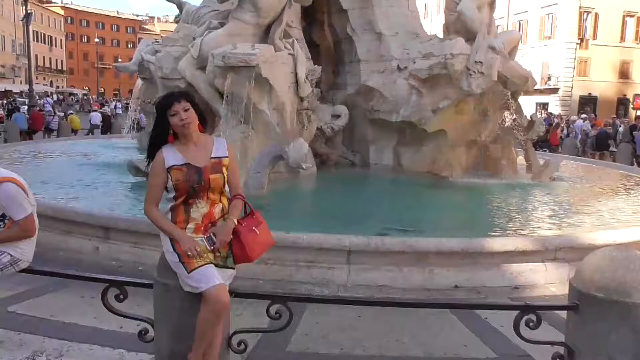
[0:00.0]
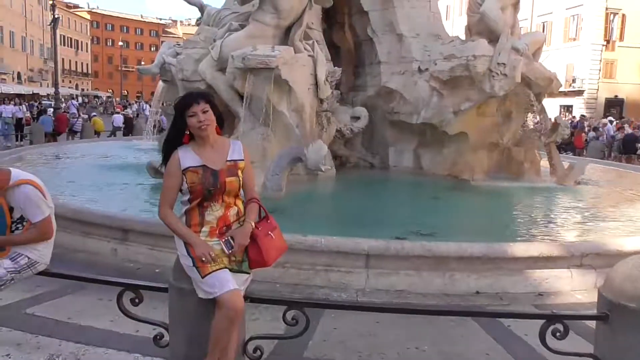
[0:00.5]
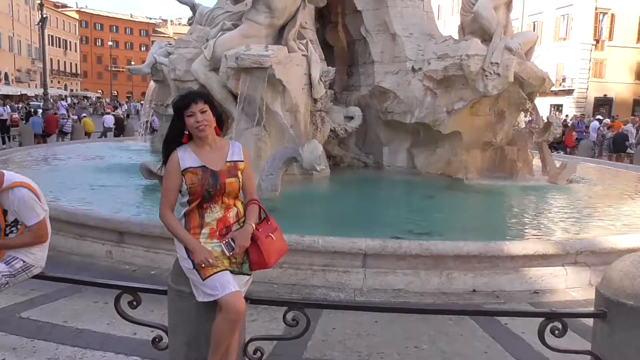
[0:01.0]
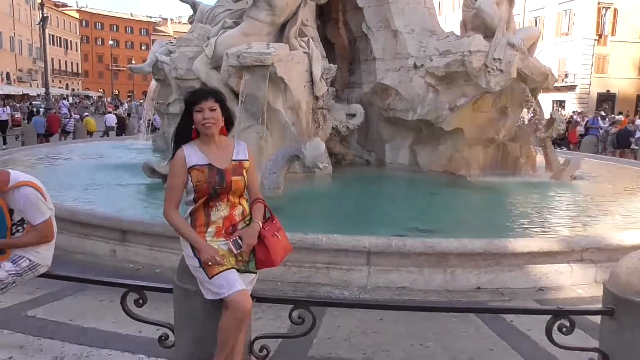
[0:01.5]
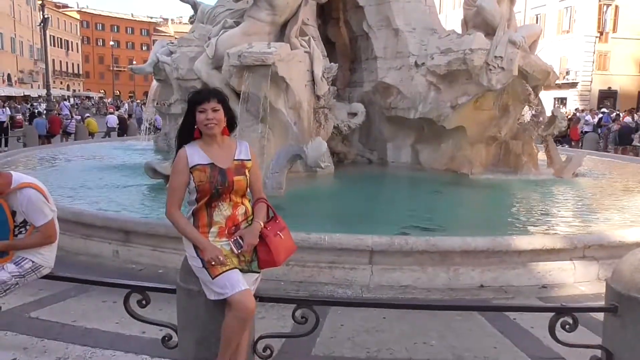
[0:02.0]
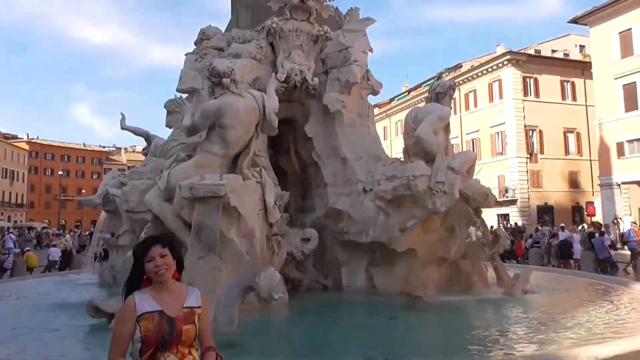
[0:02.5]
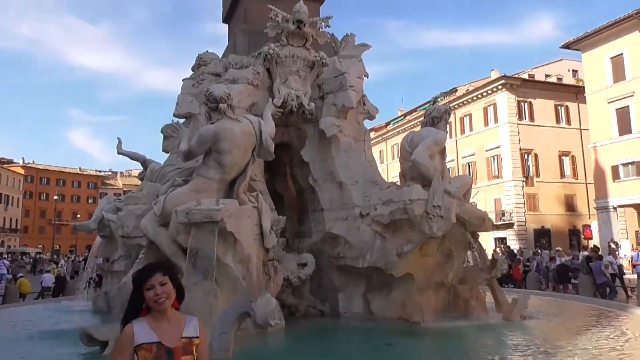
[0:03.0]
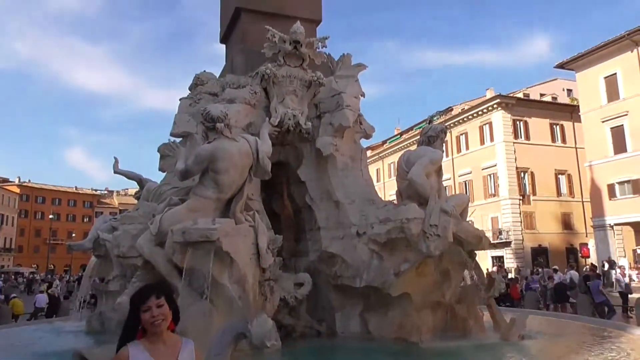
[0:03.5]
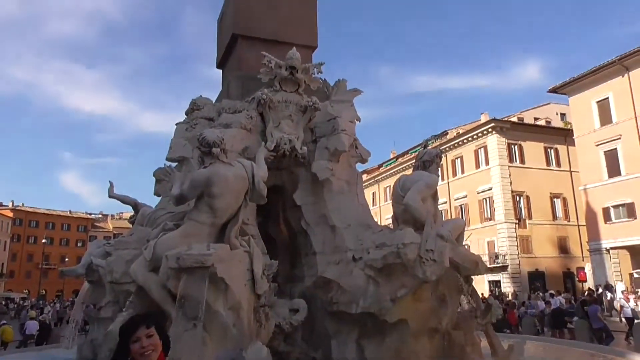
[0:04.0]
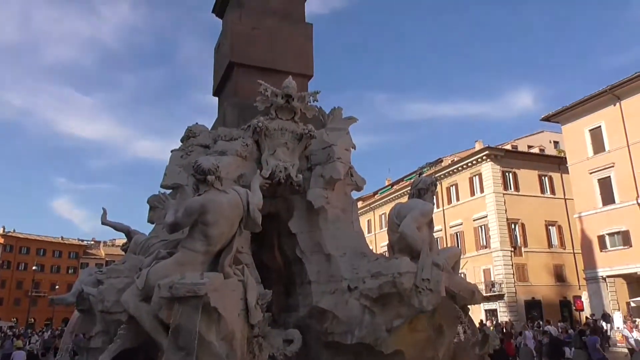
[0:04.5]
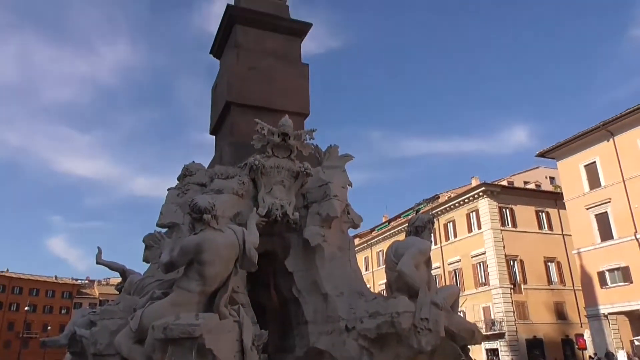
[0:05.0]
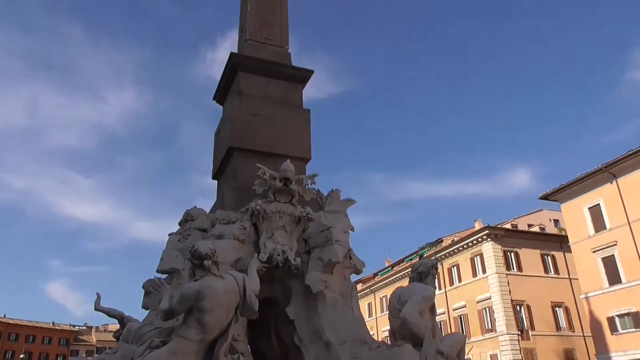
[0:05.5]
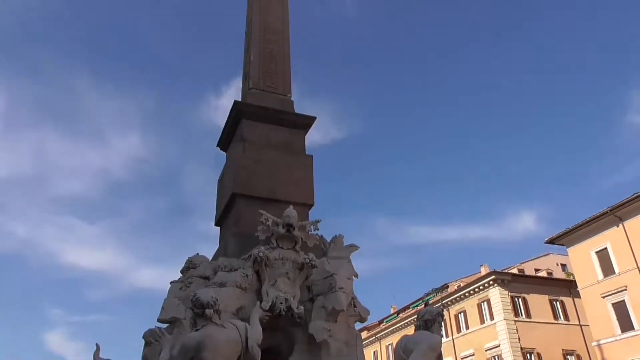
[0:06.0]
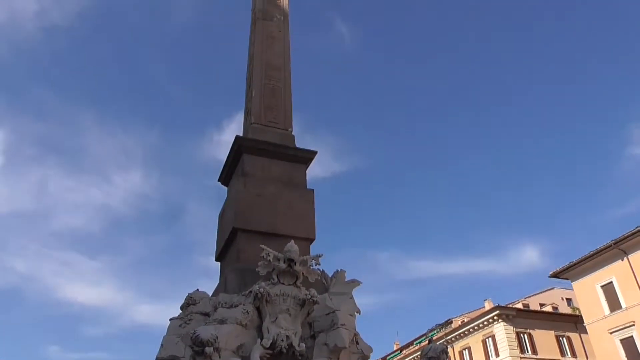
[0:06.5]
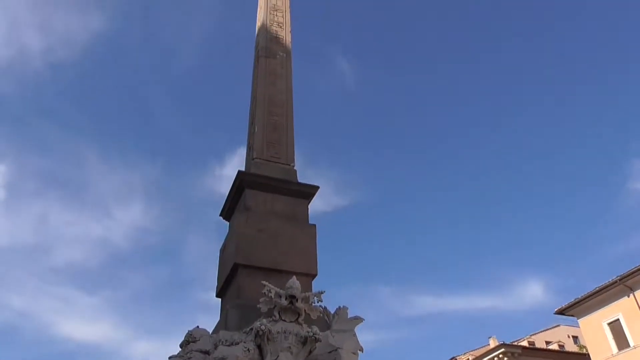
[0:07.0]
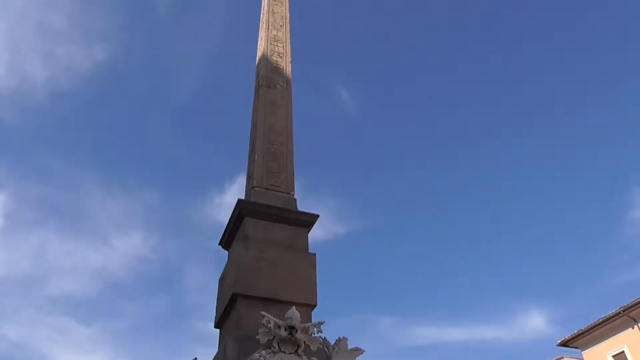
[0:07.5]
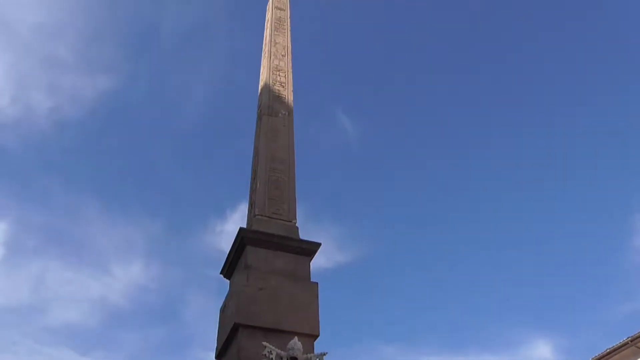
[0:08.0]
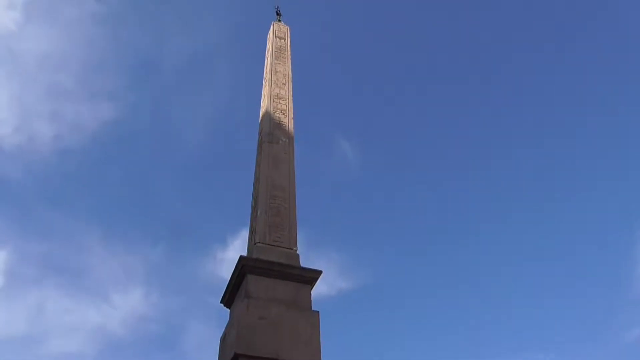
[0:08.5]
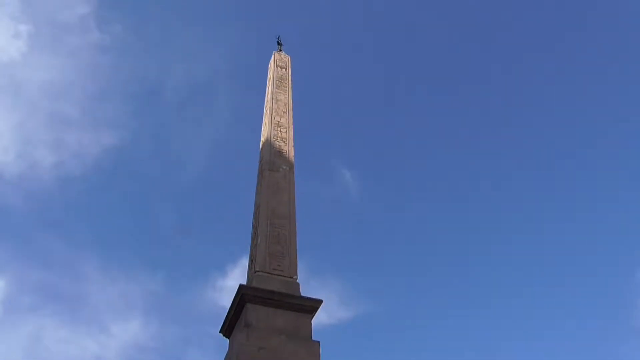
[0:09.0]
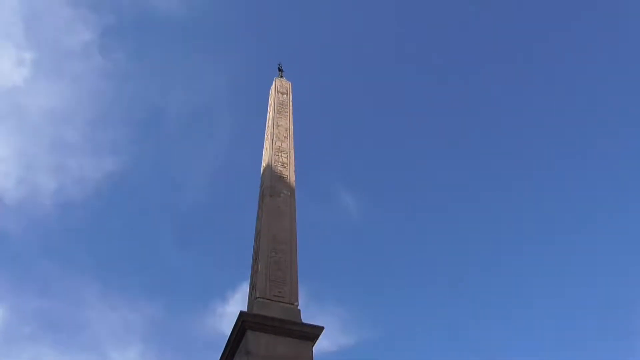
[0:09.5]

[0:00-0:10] This appears to be a travel video, apparently made by someone on vacation. It opens with a woman with somewhat long black hair and orange tassel earrings. She wears a white dress that looks like it has some sort of orange painting on it and carries an orange purse, and her cell phone appears to be held in one of her hands. She is sitting on a rounded cement structure meant for people to rest, in front of a fountain, with a somewhat European-looking city in the background. The camera pans upward onto a statue of a group of seated people with a Greek-god look; the figures have drapes partially covering their nether regions, some facing outward and some turned inward. The camera pans up toward the top of the statue, which looks like a mixture of Greek and Gothic styles, and then to the top of the very tall structure, which has some sort of monument on top. The structure is mounted inside a fountain made of a lighter-colored stone. Tourists mill around in the background, and it is daytime.